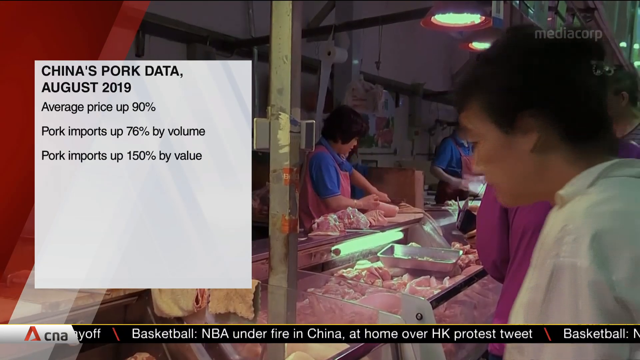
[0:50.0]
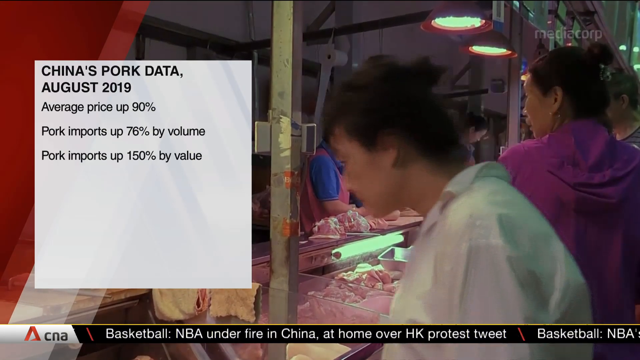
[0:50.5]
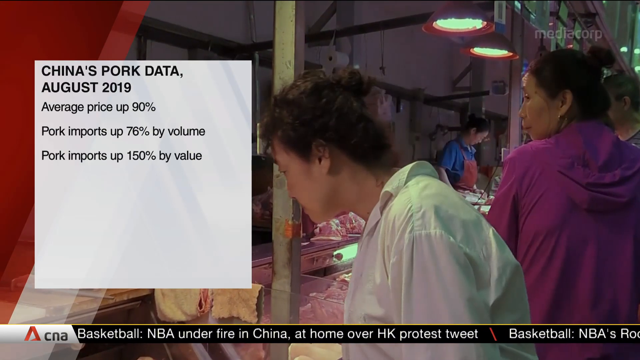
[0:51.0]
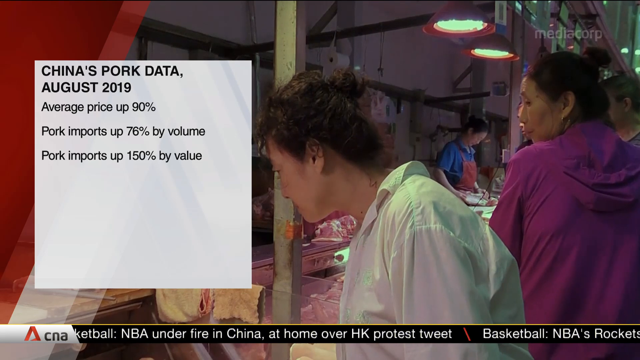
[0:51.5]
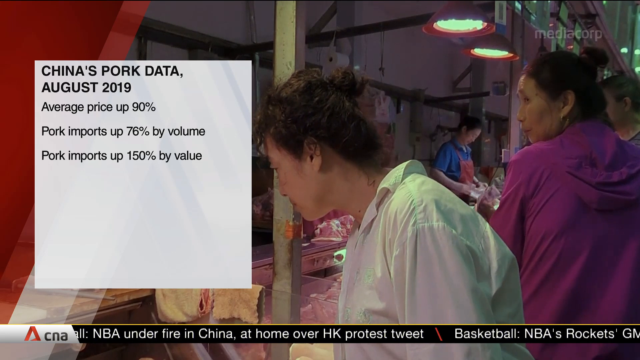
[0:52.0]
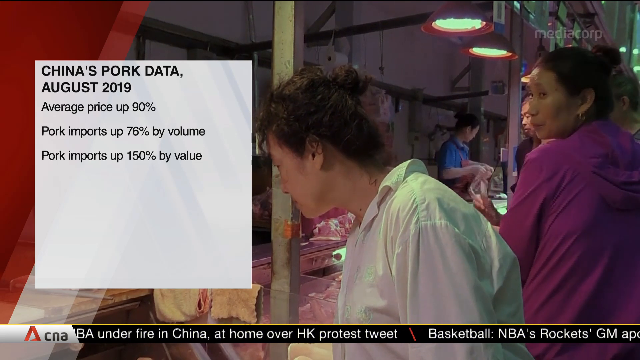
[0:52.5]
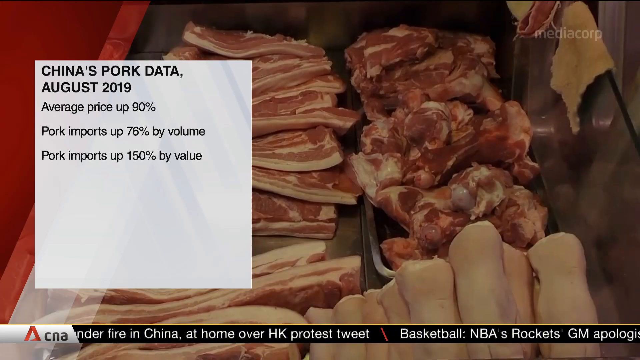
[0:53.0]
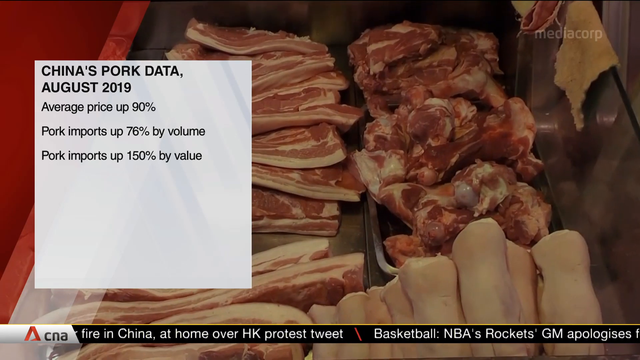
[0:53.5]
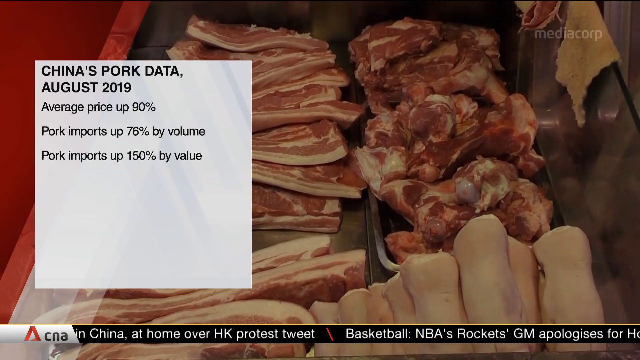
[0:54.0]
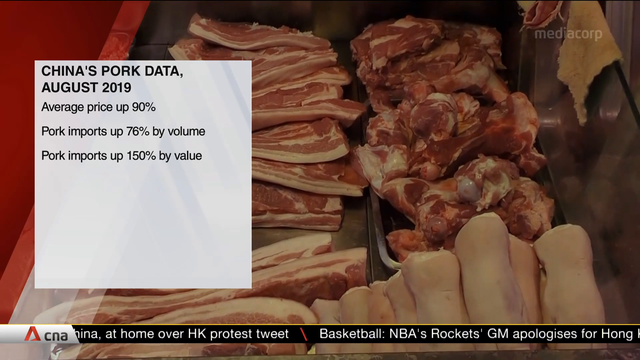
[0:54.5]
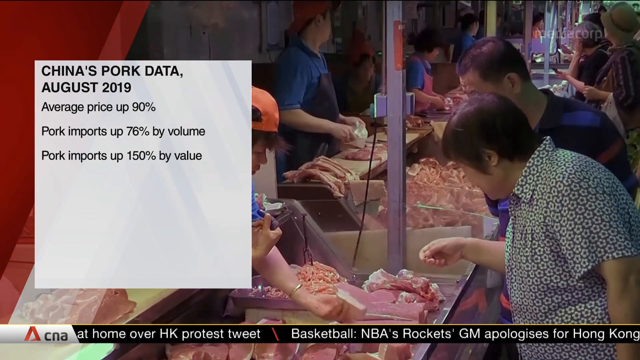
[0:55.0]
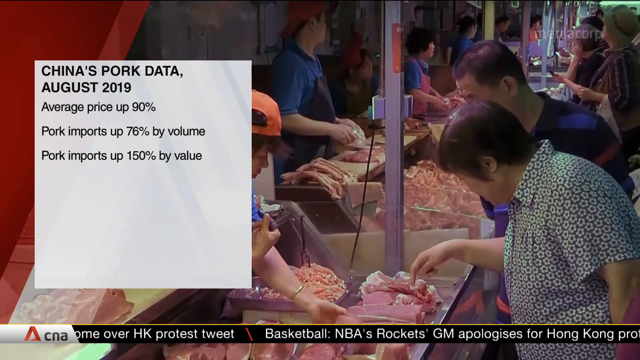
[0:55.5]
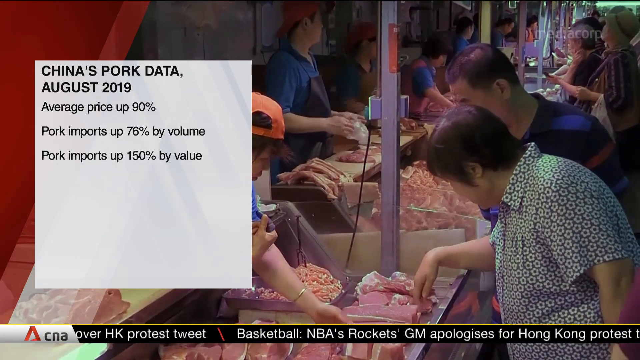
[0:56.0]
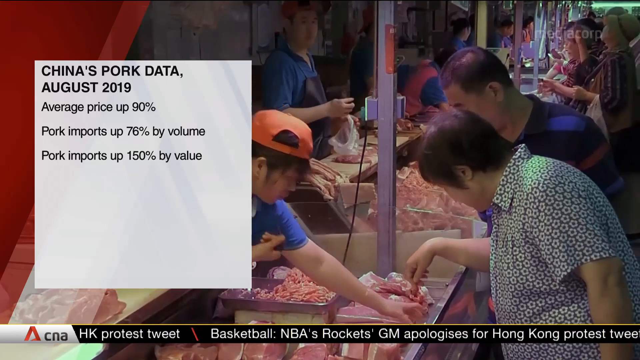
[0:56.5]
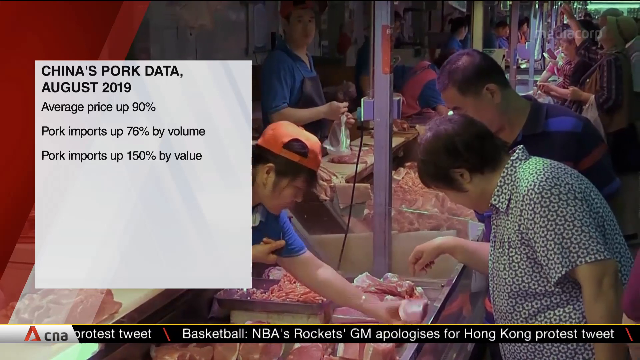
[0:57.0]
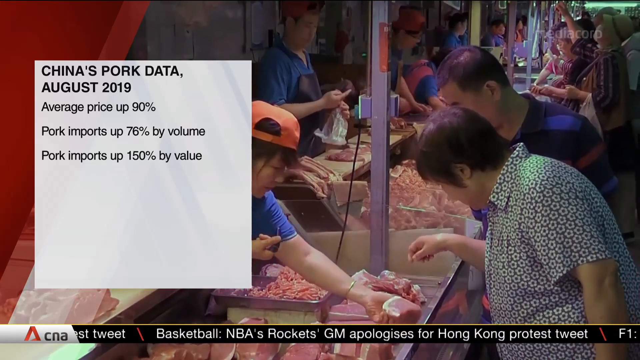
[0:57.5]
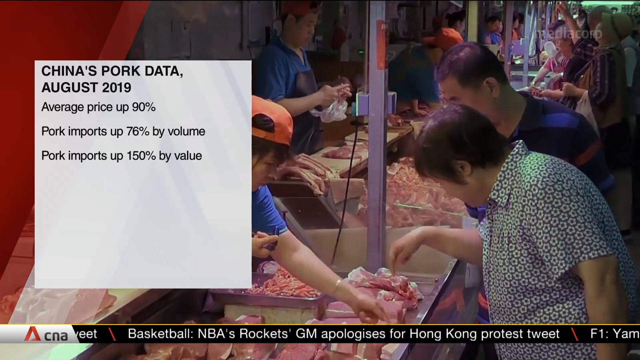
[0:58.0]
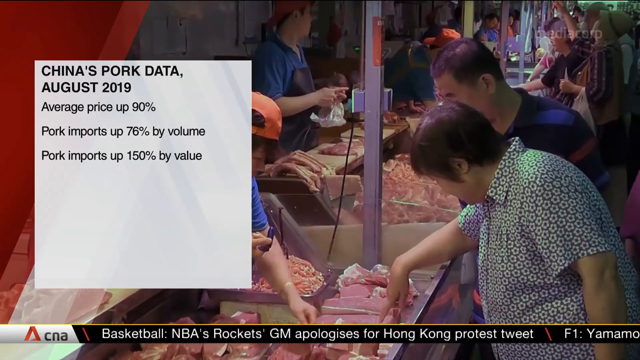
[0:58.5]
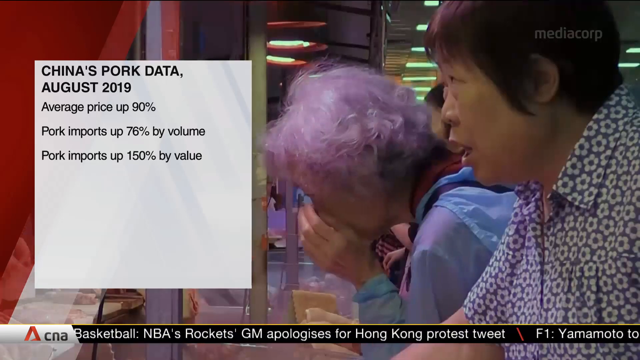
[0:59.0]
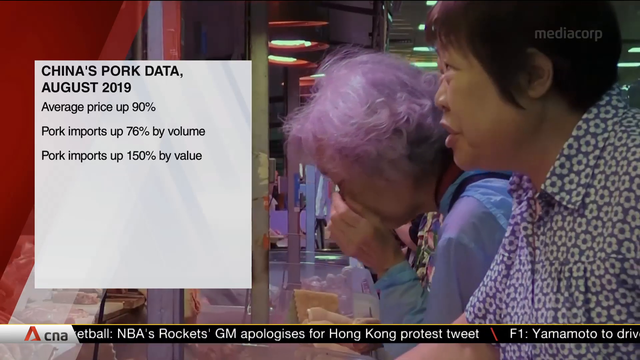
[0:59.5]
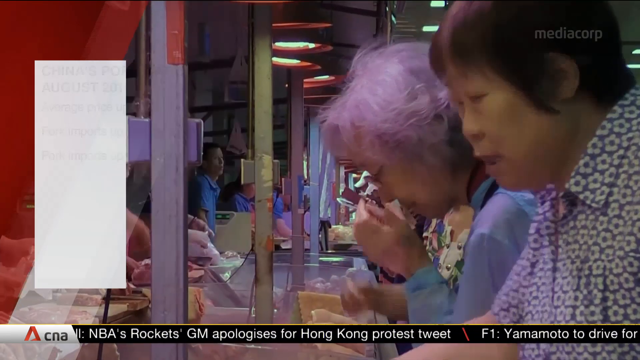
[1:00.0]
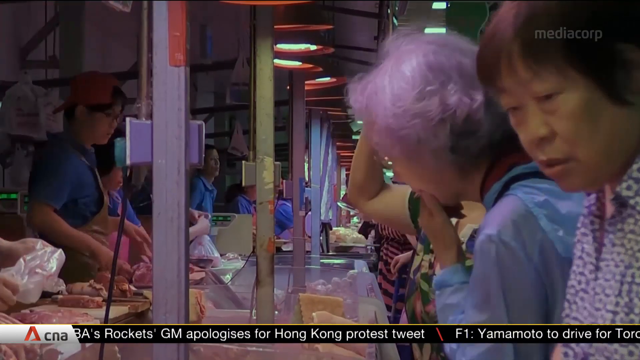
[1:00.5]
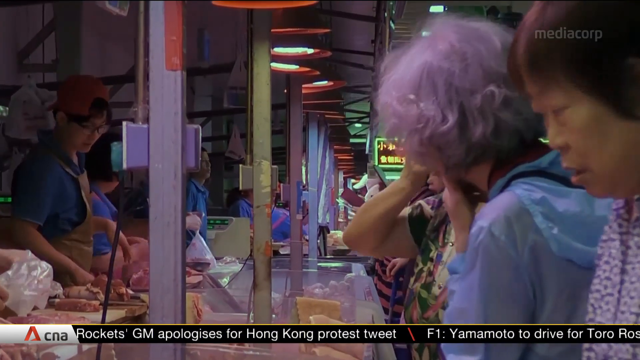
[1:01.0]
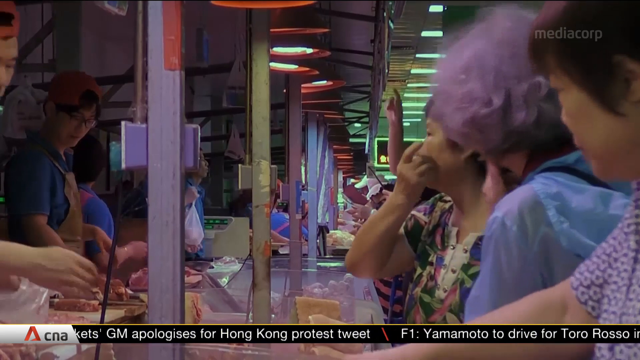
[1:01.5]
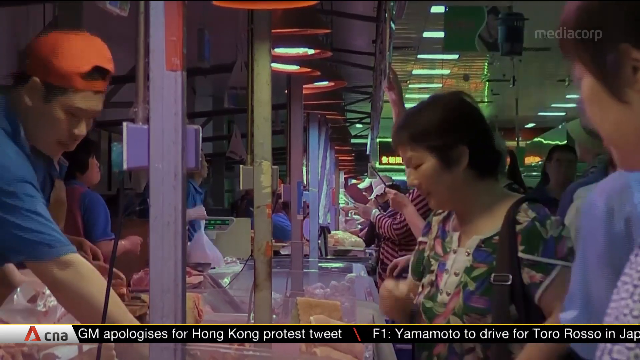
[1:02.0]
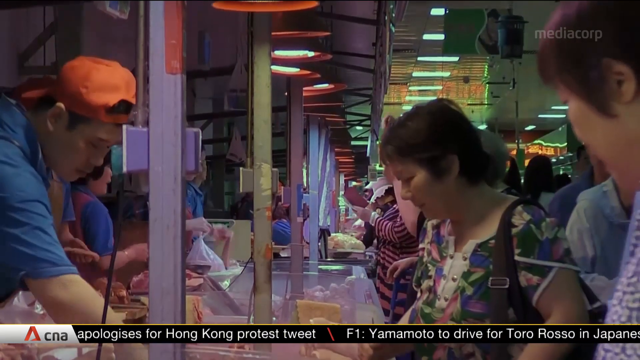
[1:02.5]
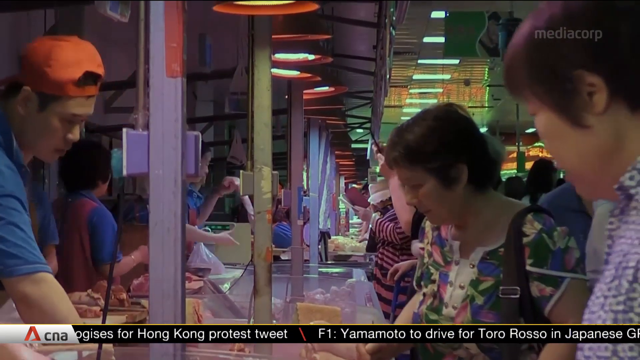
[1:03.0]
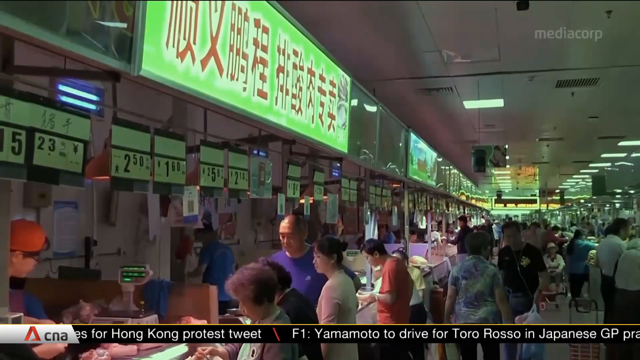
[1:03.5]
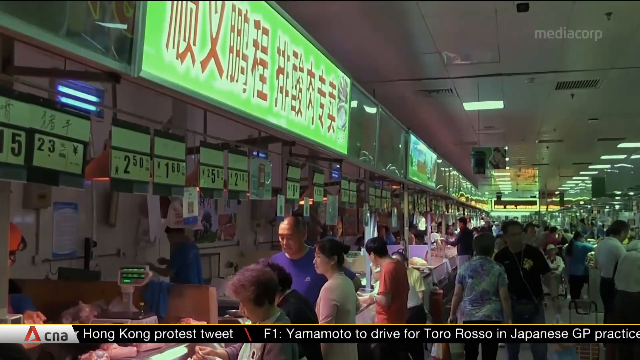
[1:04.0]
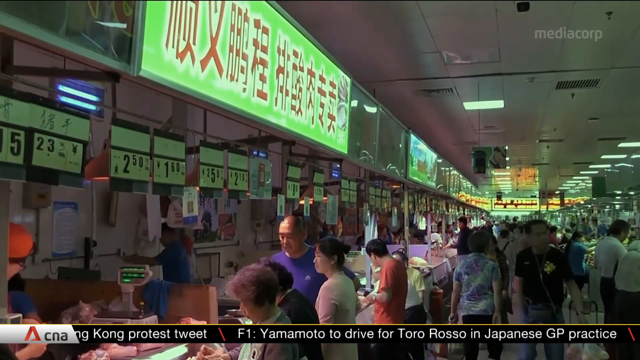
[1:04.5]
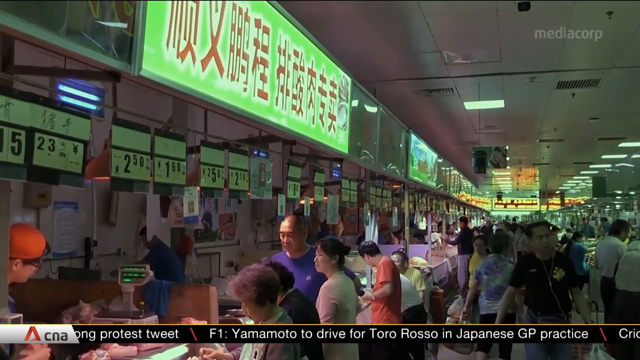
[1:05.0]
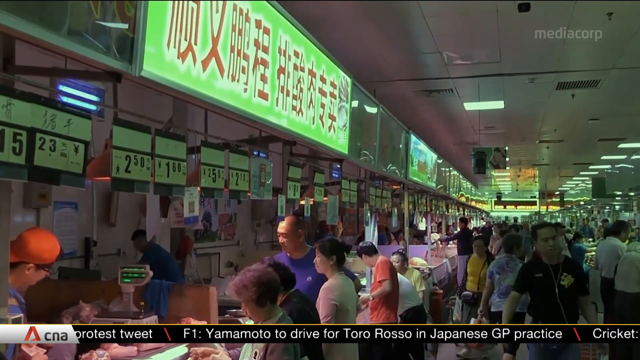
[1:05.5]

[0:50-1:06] The pigs are playing with each other. Pork meat is then shown at a butcher's, where it is being sold. Many people are there buying the fresh pork.